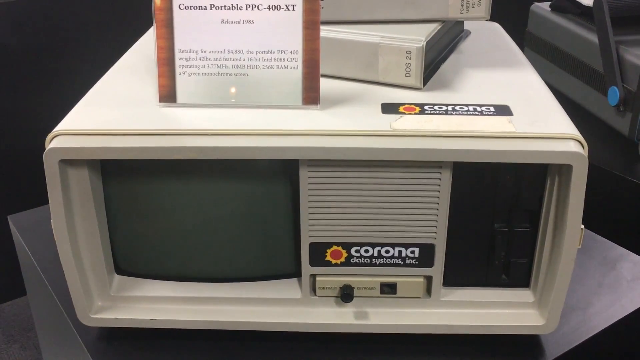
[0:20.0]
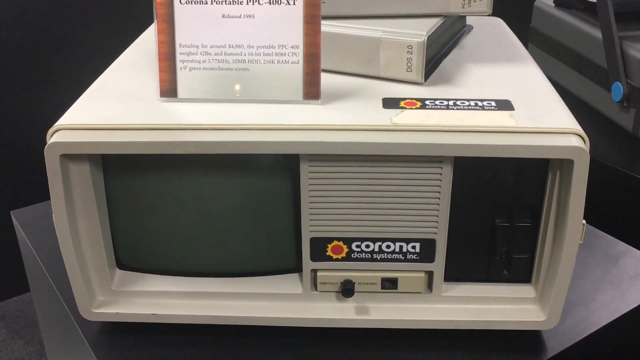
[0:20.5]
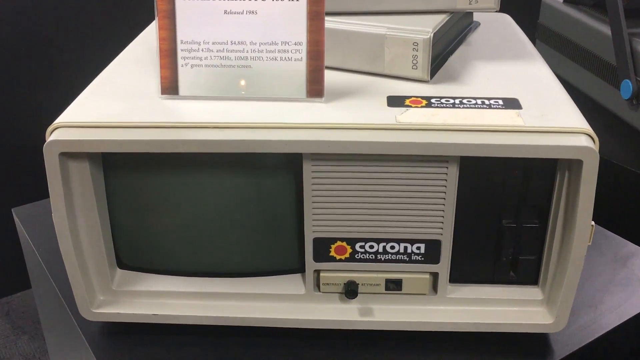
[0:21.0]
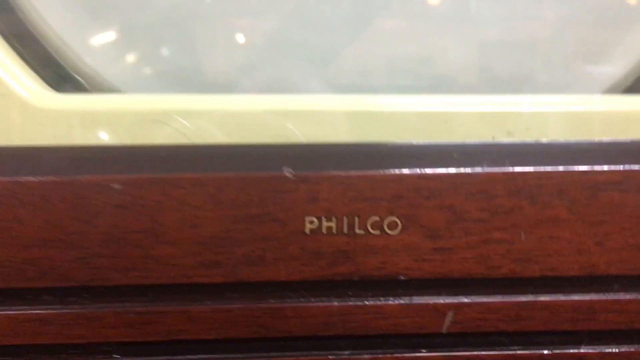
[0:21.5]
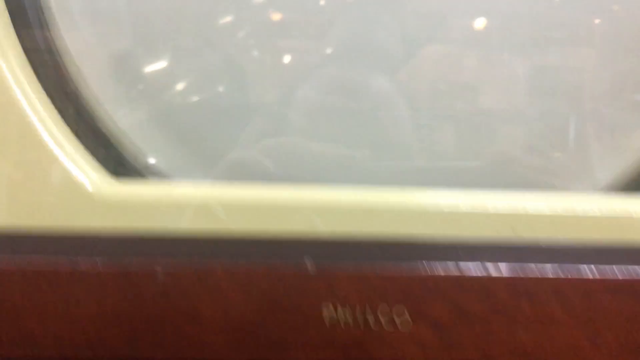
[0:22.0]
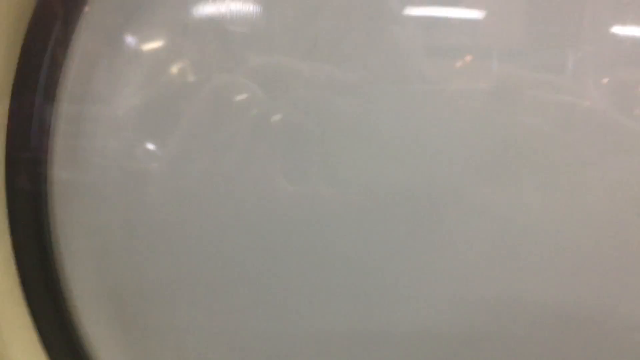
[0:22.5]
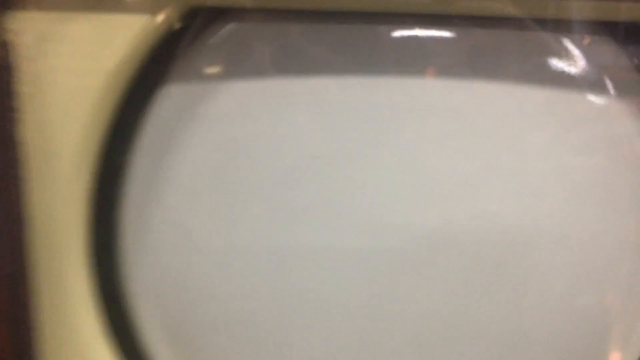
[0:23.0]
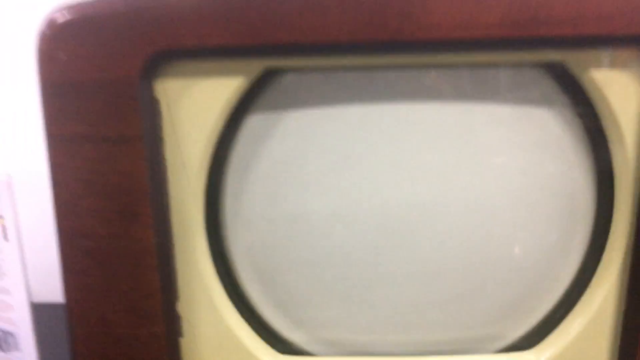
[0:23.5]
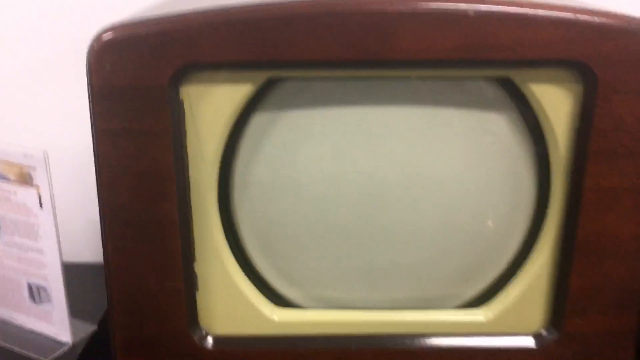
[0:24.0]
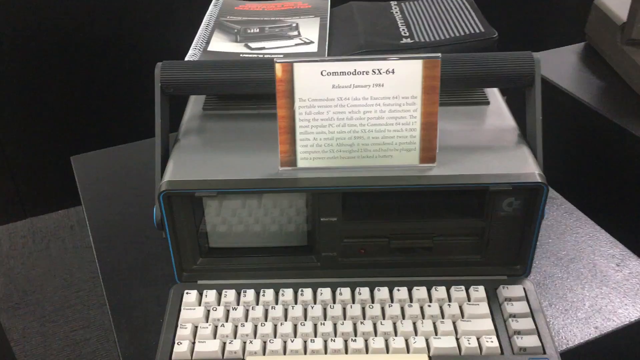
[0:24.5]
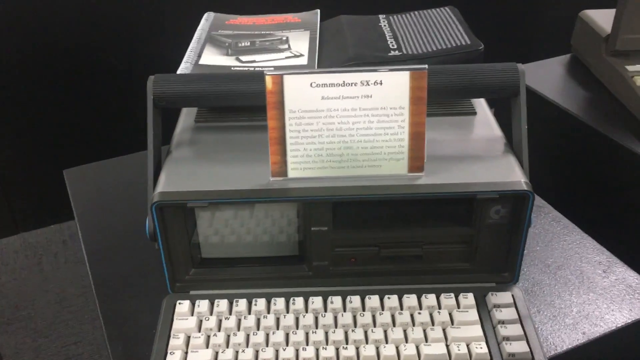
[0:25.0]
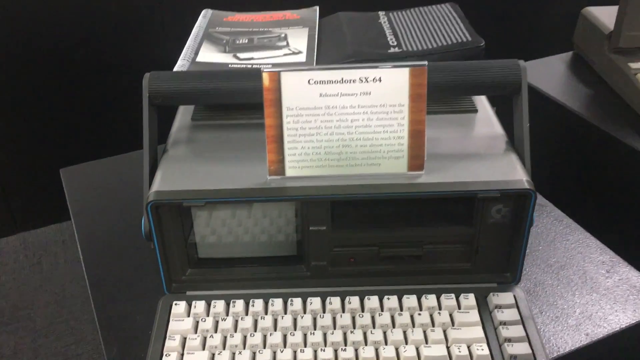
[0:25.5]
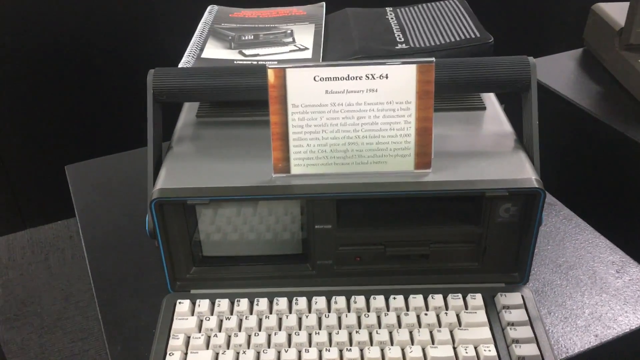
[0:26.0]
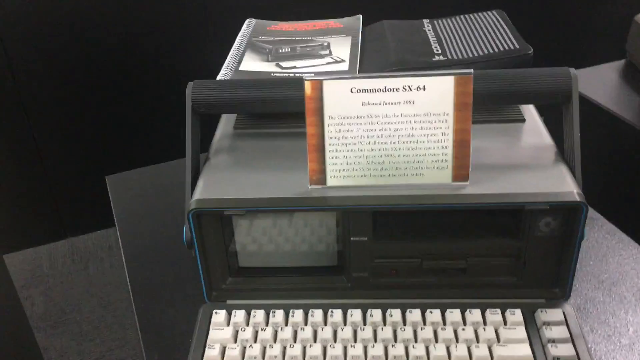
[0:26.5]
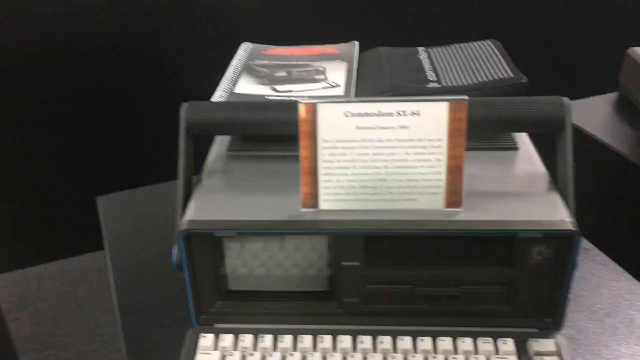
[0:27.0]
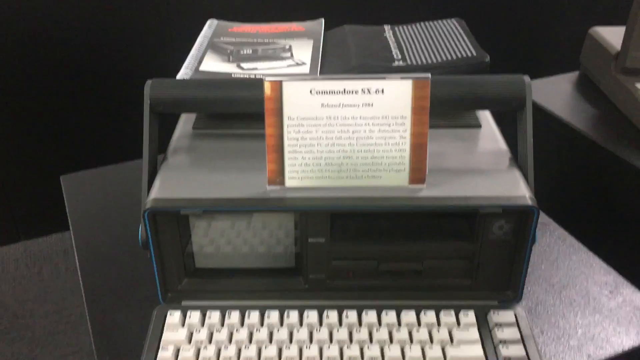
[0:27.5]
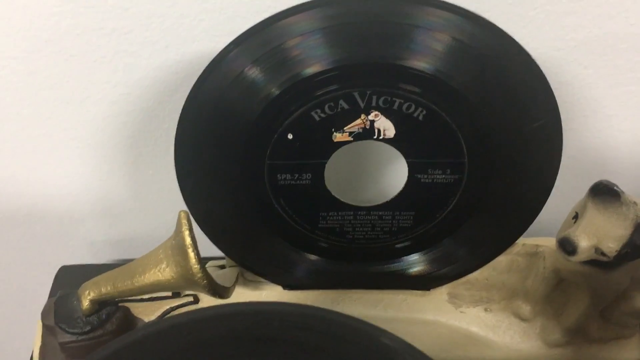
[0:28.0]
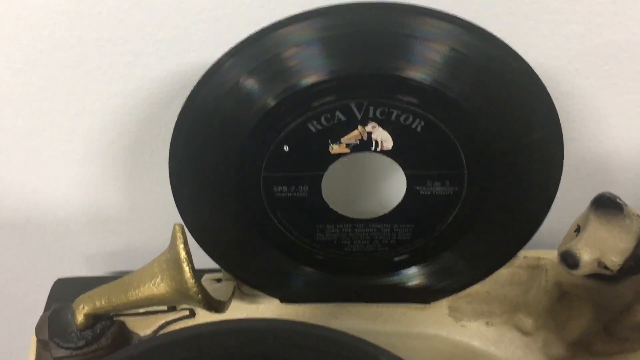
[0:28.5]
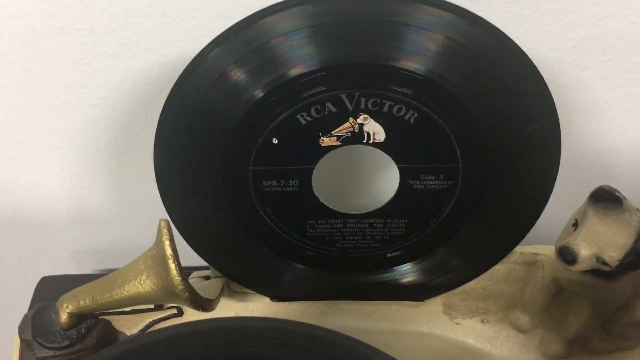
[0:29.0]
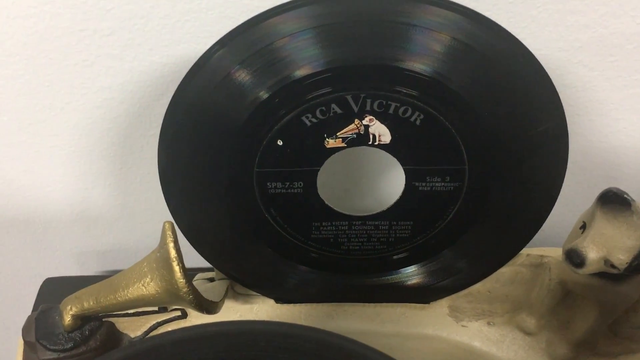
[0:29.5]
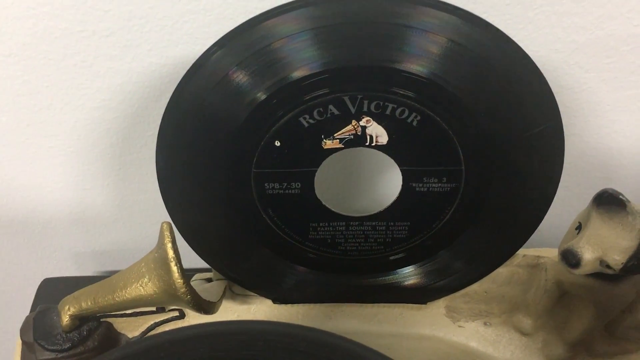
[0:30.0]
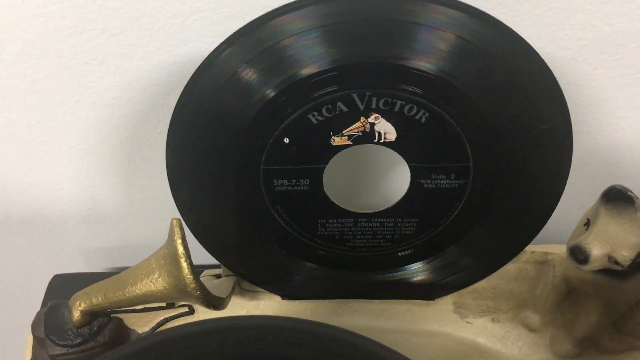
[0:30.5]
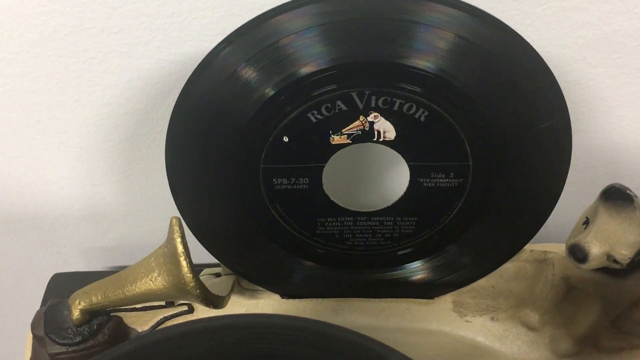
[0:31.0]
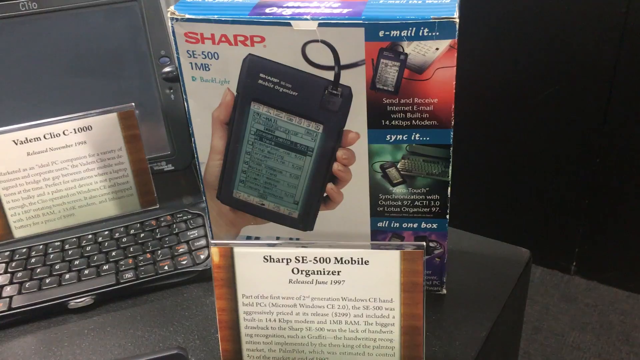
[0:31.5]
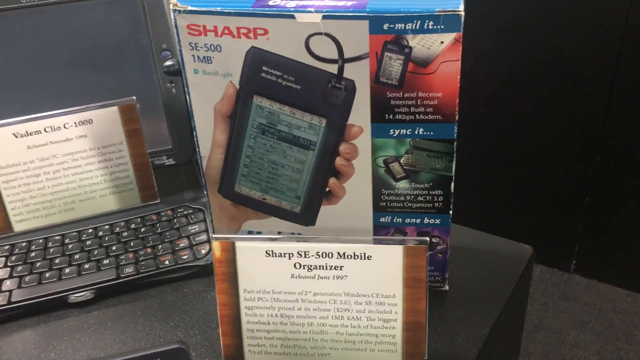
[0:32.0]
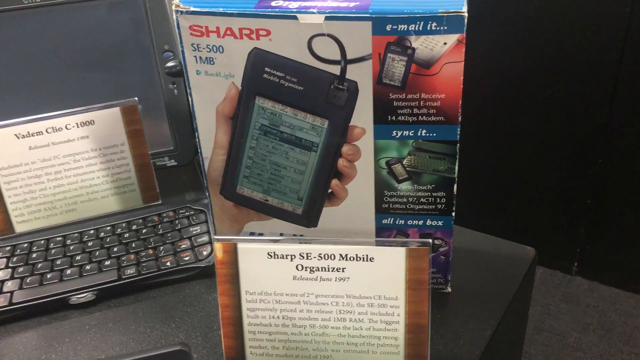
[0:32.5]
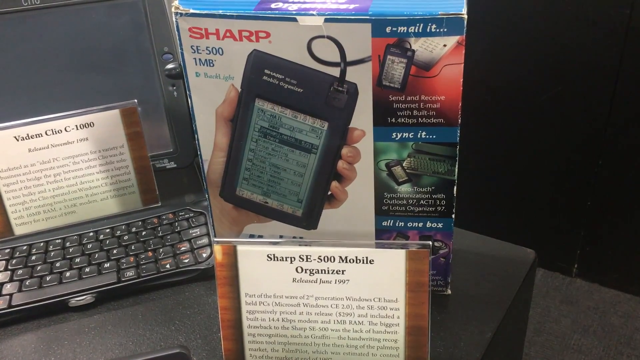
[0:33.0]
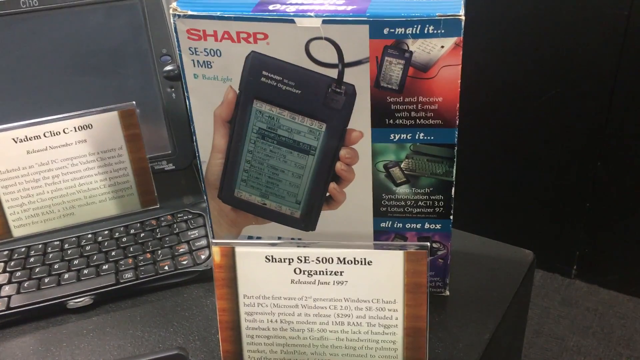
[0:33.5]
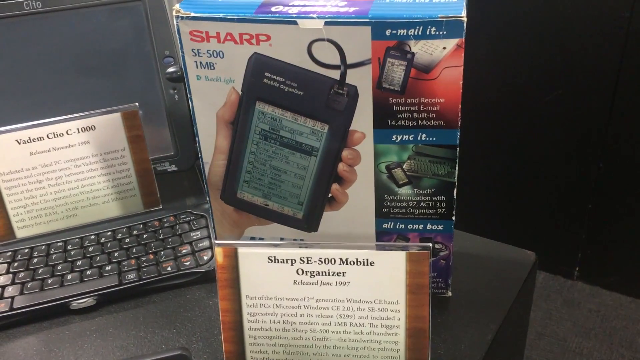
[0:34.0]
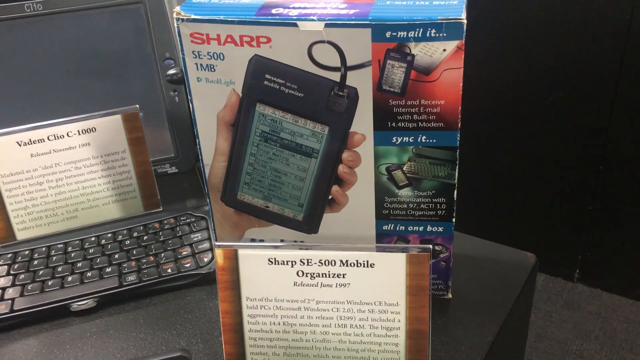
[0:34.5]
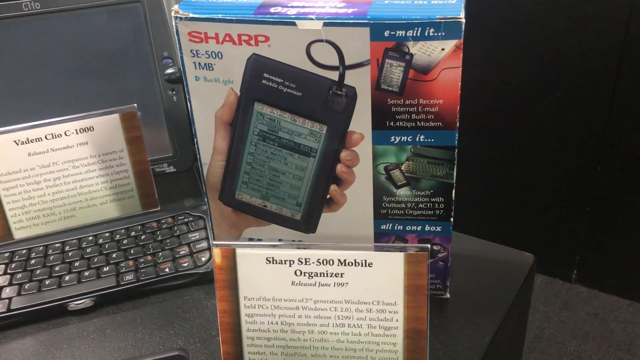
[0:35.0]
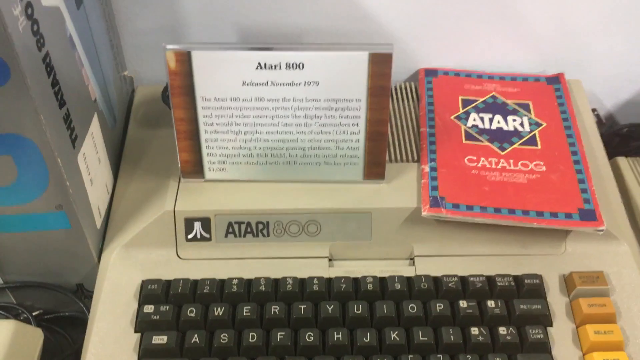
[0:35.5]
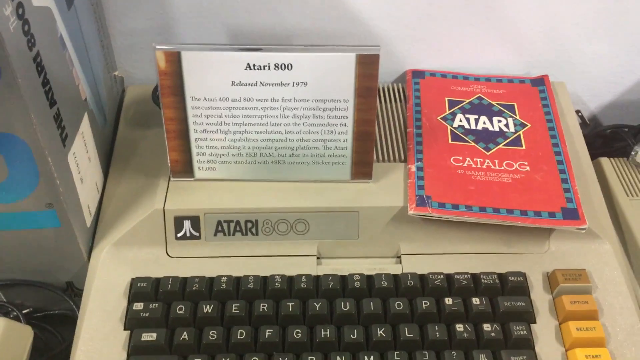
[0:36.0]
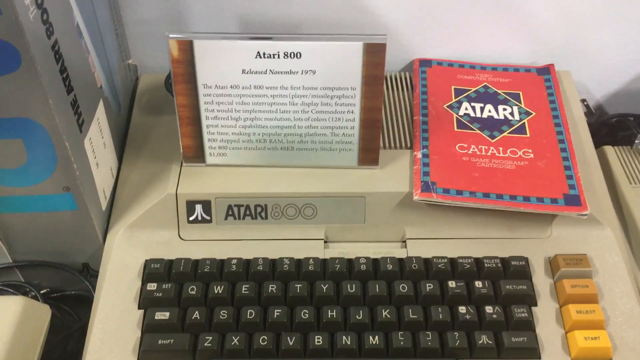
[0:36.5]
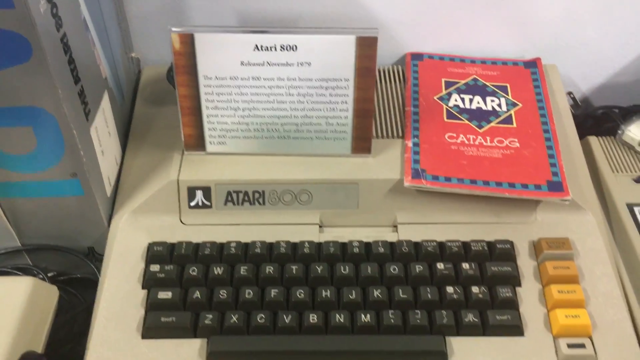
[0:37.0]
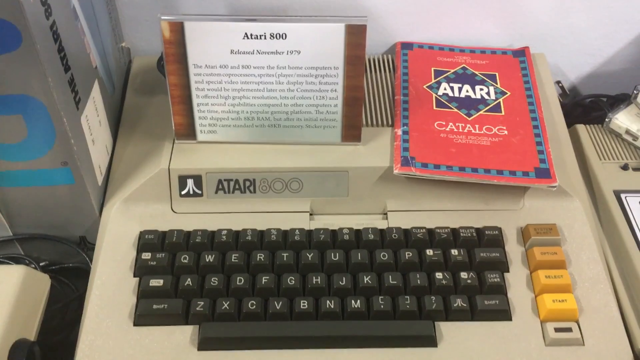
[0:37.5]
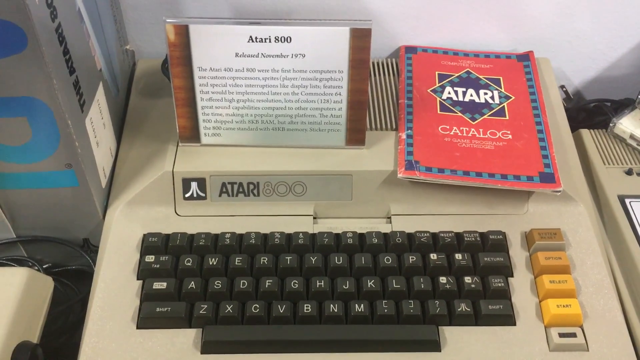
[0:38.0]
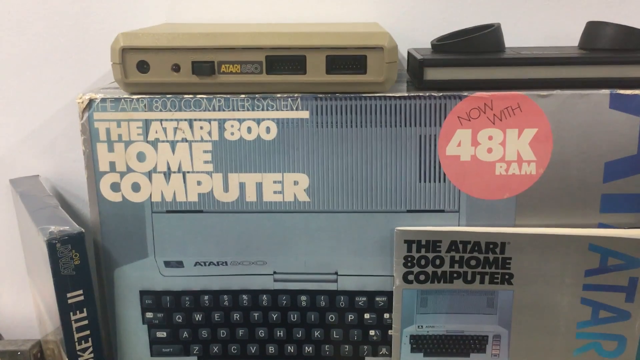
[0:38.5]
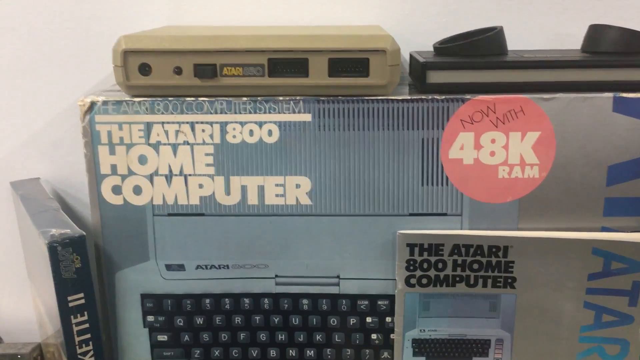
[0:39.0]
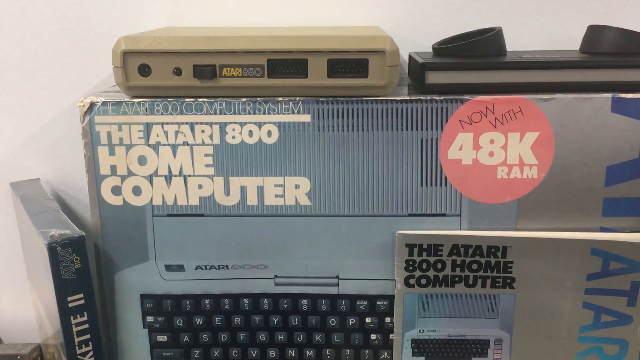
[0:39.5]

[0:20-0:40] An item called Corona appears, which seems to be a small radio television. There is what seems to be a cassette radio, an RCA Victor item, what seem to be musical instruments, what seems to be a Sharp item, and an Atari home computer. All of these machines are very old, and there are a lot of old machines on display, suggesting a technological museum showing old machinery and technology.